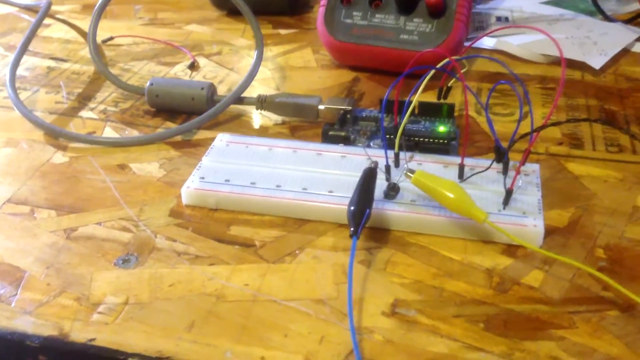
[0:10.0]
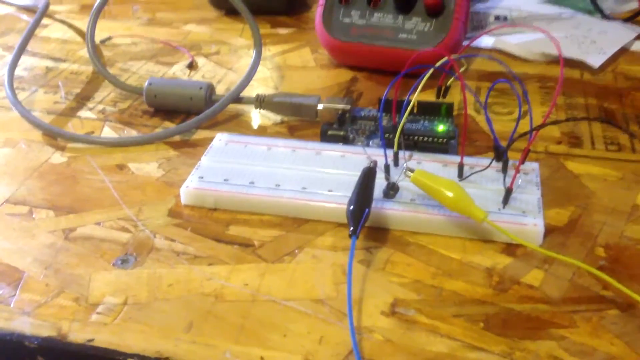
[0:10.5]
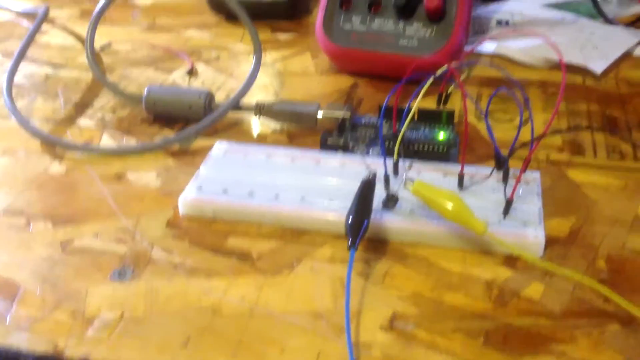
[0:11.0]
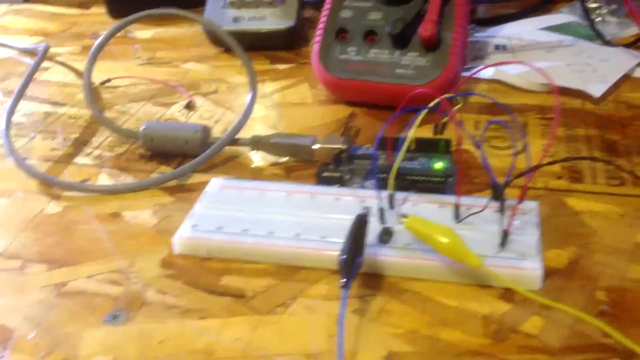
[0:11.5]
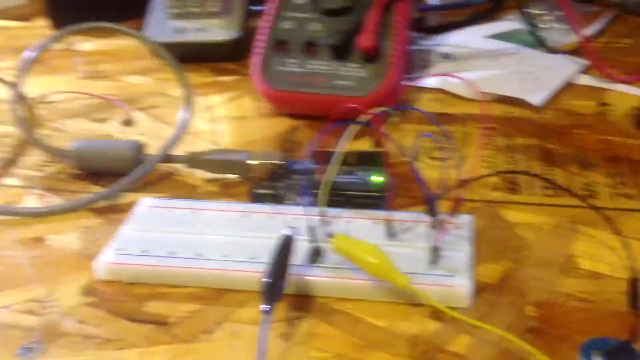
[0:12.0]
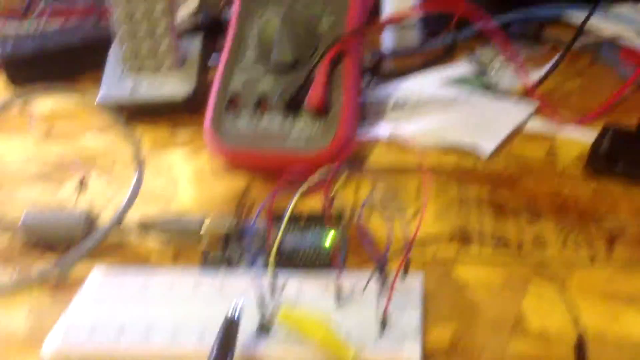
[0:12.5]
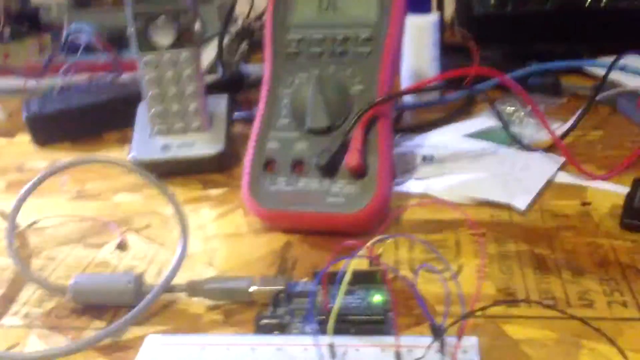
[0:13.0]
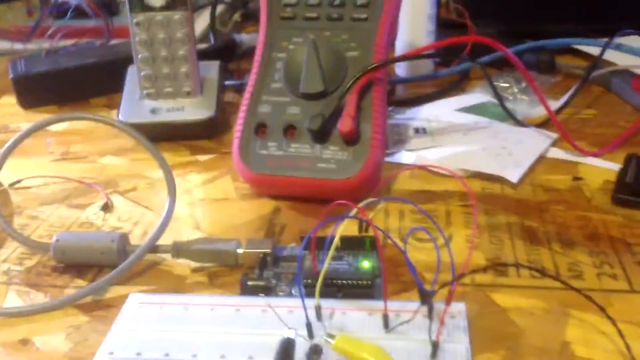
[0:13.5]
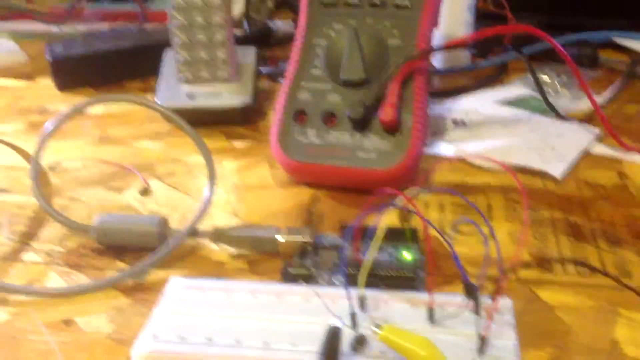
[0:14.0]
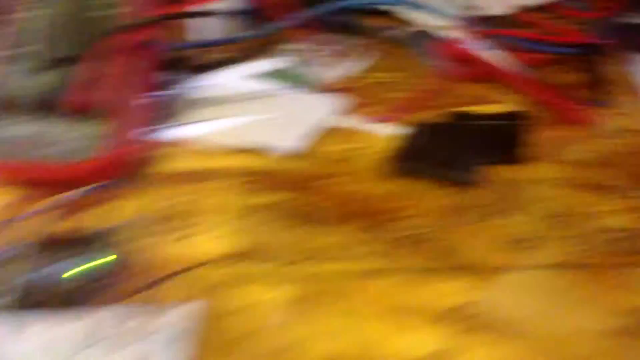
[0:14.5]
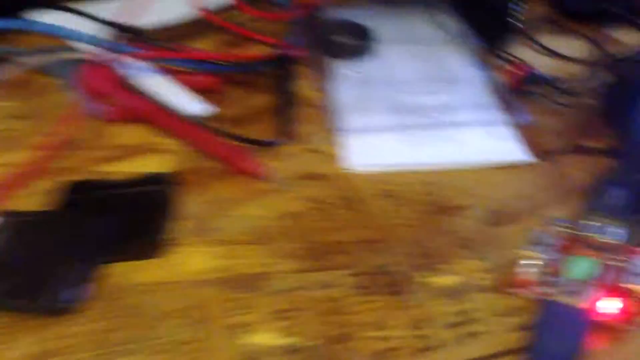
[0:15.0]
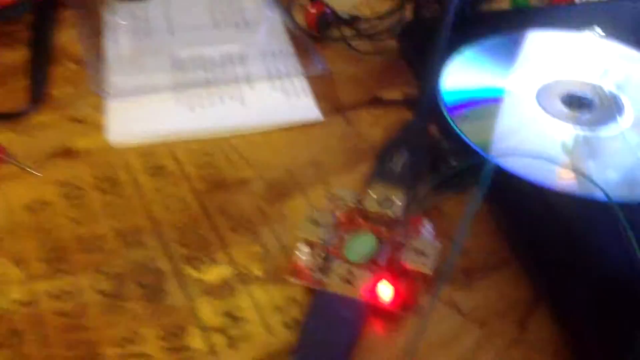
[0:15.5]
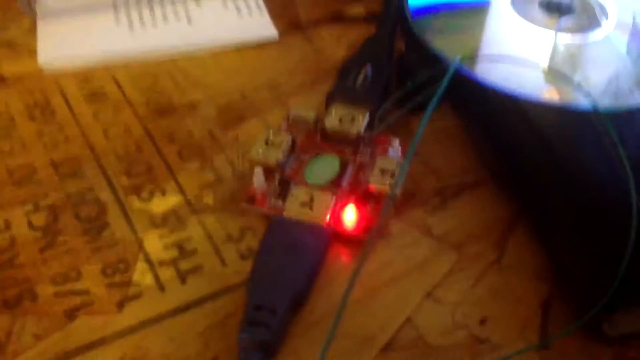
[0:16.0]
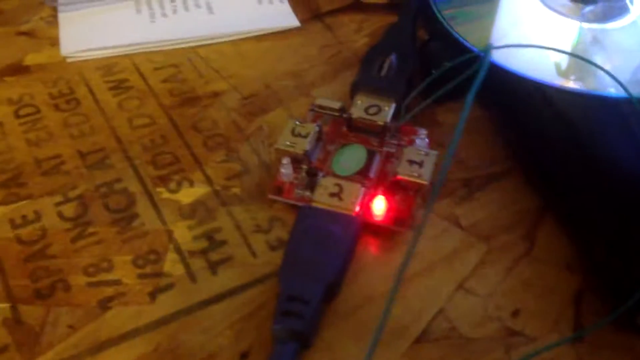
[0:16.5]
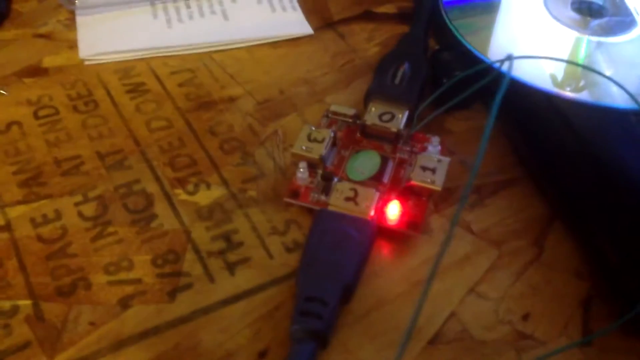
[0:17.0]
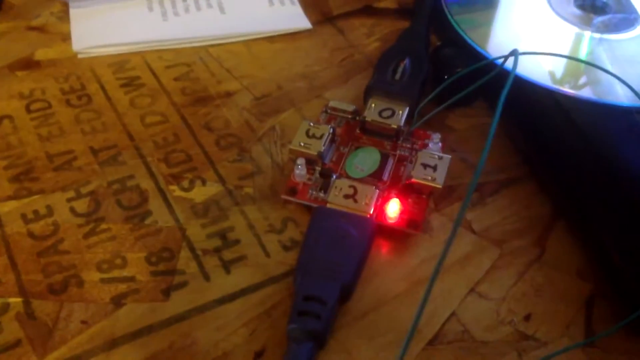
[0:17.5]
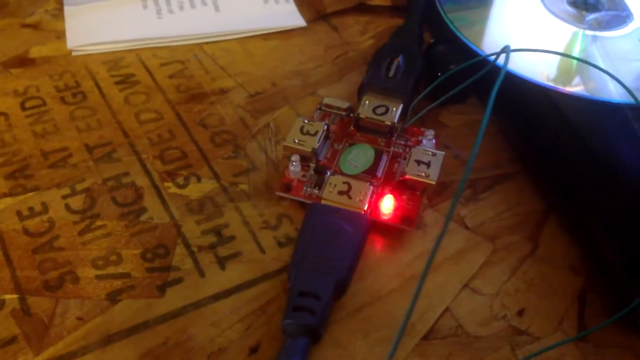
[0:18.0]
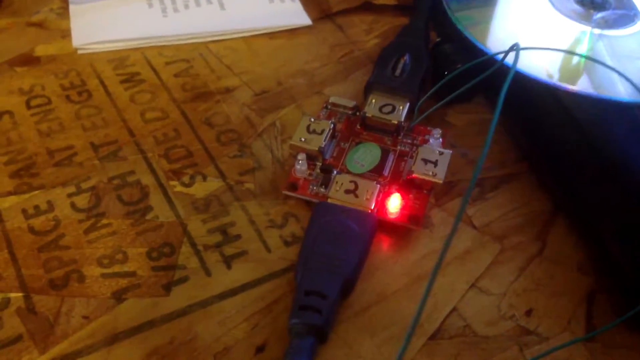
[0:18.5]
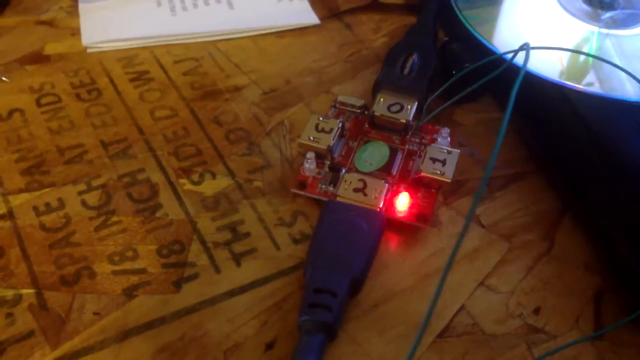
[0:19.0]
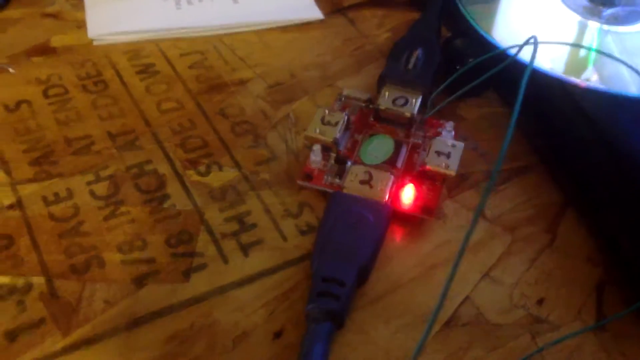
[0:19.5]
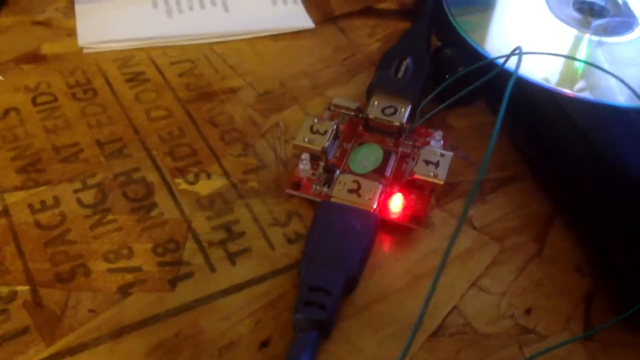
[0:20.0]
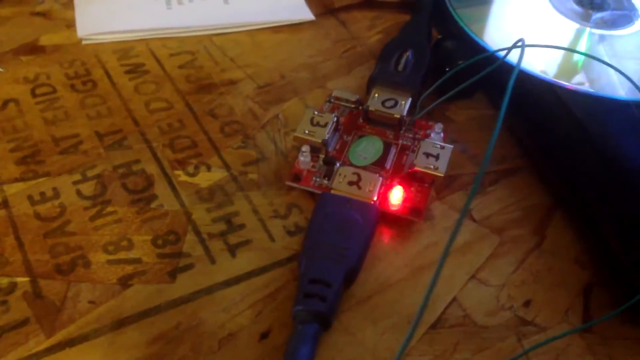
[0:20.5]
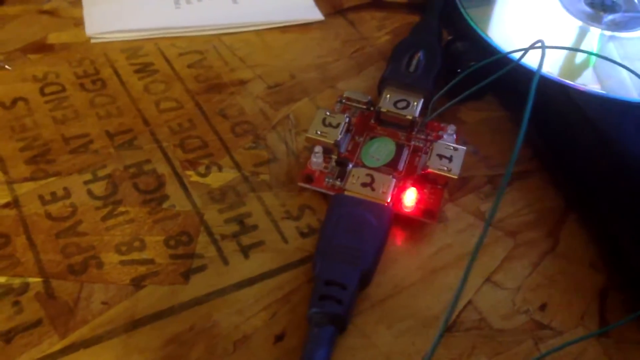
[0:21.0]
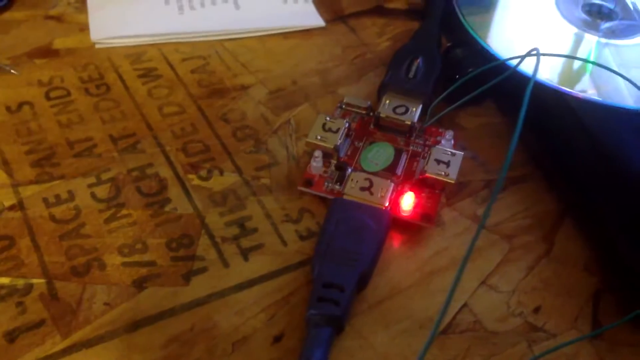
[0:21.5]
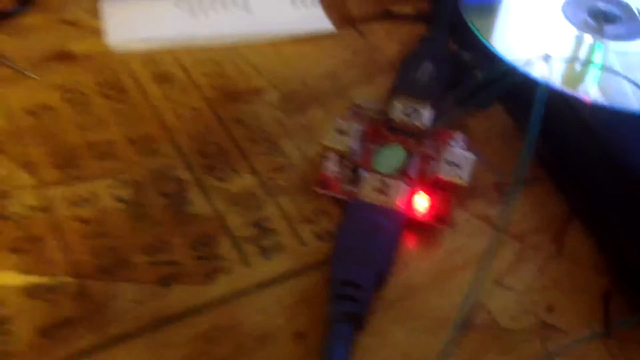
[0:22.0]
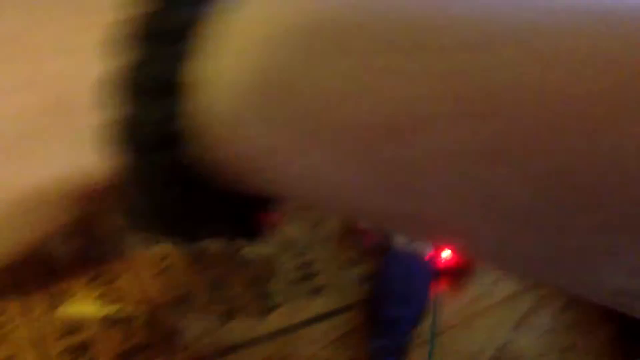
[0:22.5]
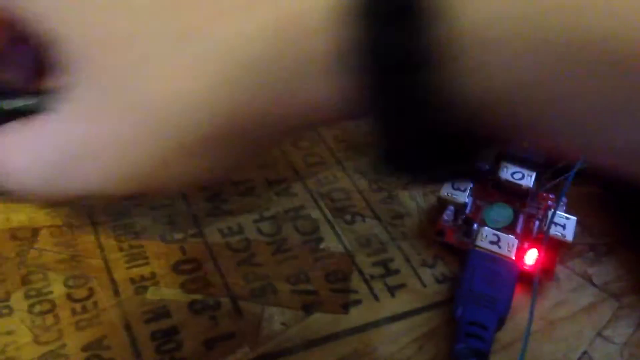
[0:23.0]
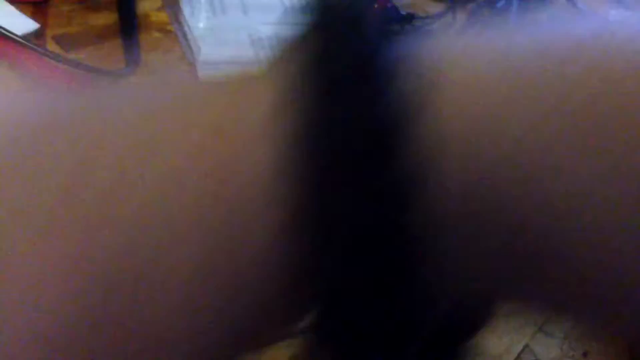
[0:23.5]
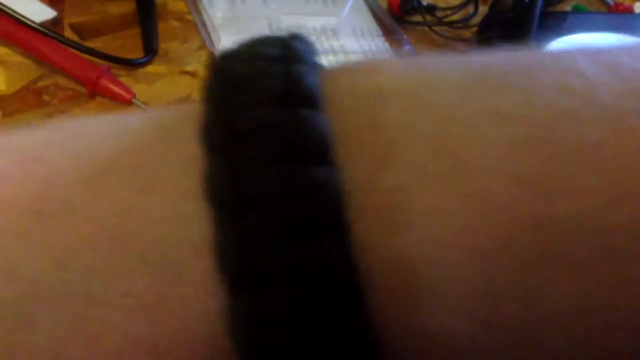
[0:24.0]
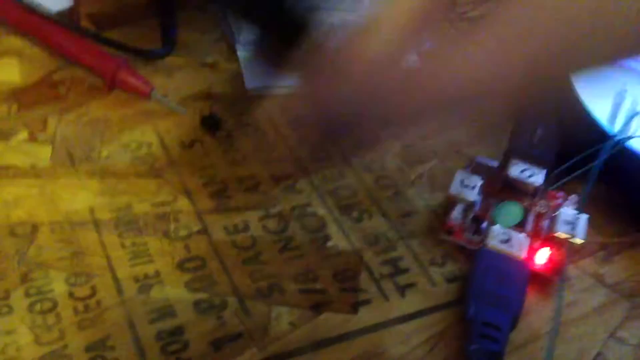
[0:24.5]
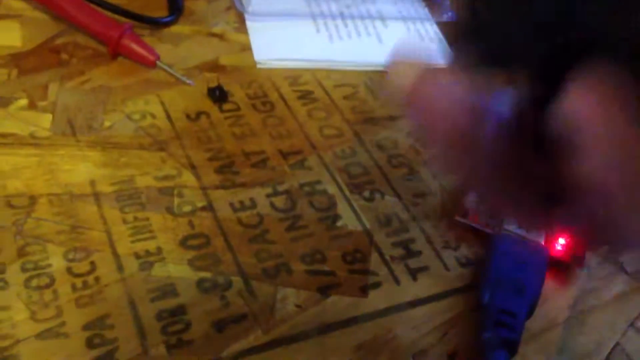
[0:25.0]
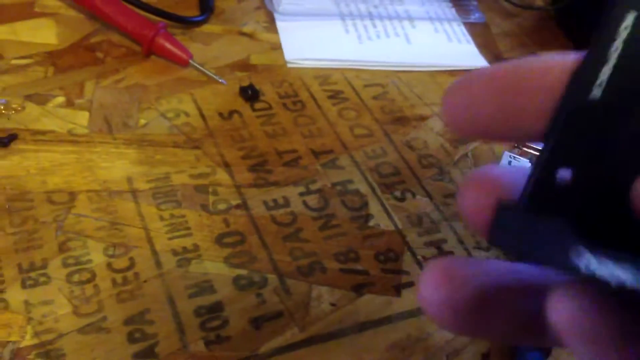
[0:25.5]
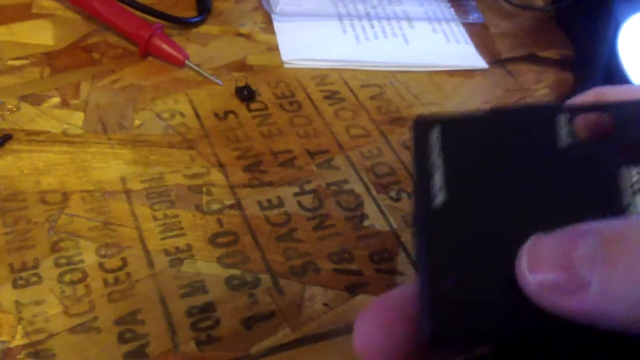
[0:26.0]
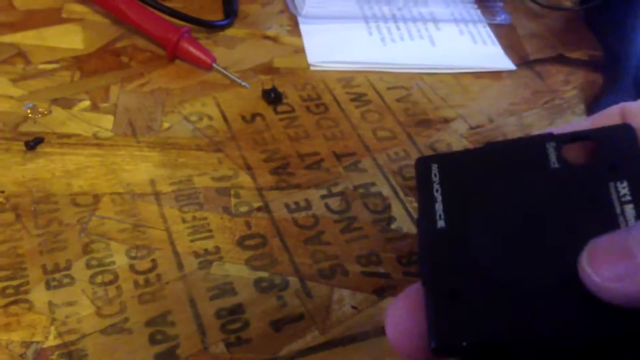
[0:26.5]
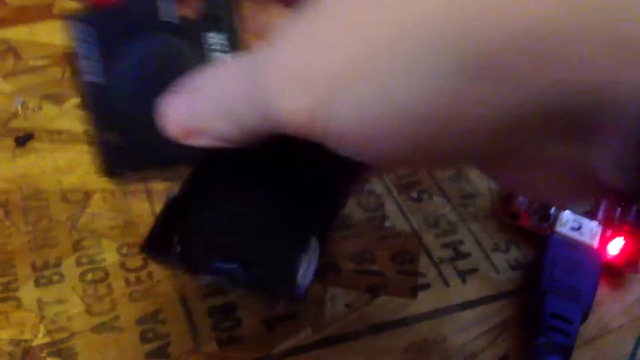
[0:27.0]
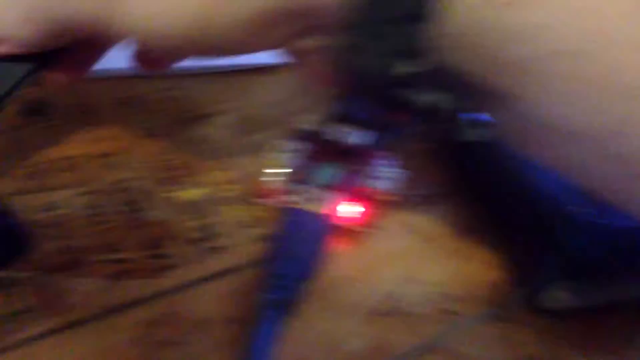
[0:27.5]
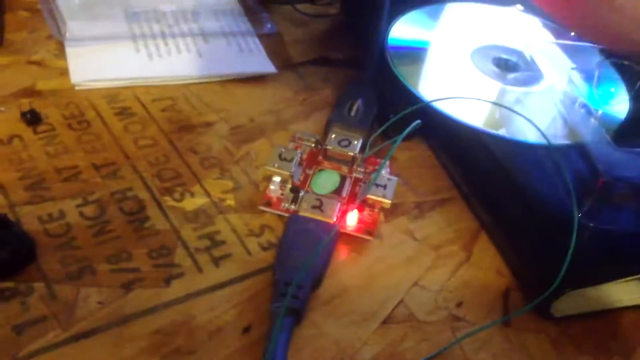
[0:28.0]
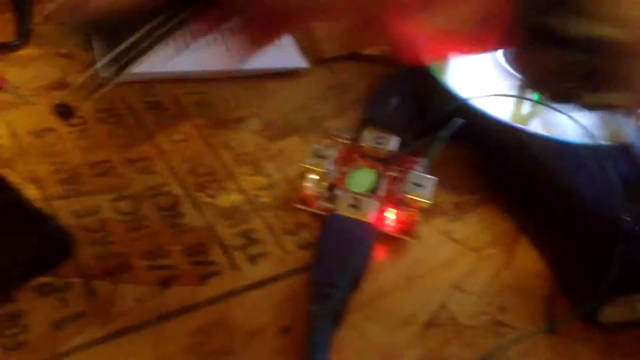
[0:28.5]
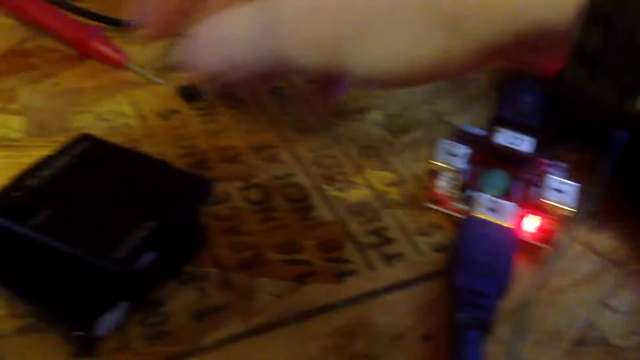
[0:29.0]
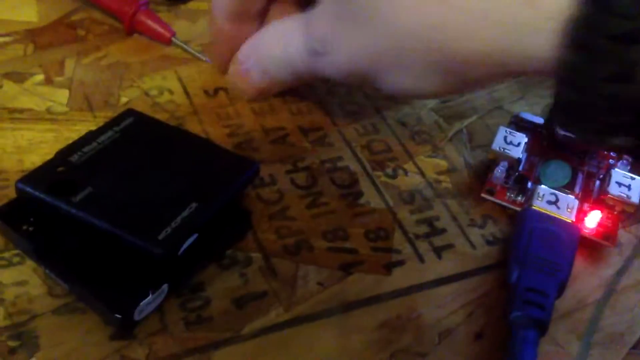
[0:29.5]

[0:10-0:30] Electrical circuits are on the table with cables around them, in blue, yellow and red, and a small electrical device shows a green light. There is also a gray cable that looks like a USB cable, and a multimeter on the plain brown table surface. Many other materials are around the table, including a CD and a small panel with a red light and the numbers 0, 1, 2, 3 on it. A person holds a small, unidentified device.